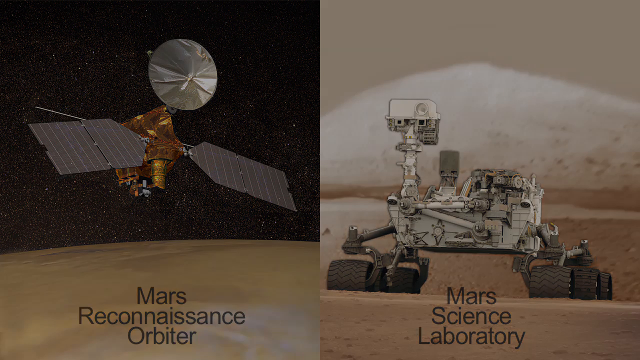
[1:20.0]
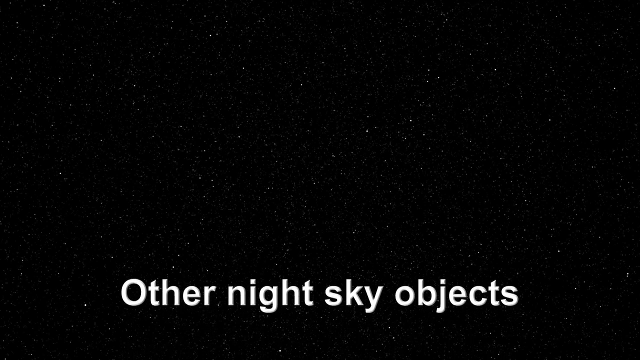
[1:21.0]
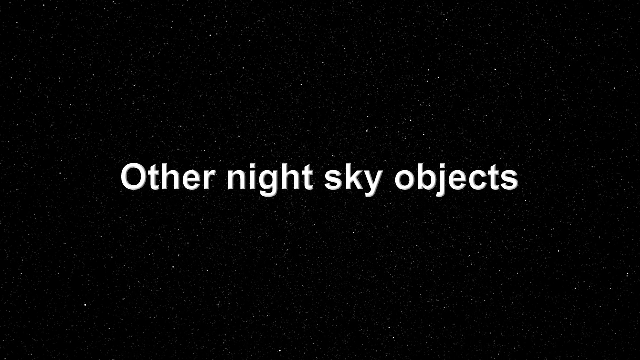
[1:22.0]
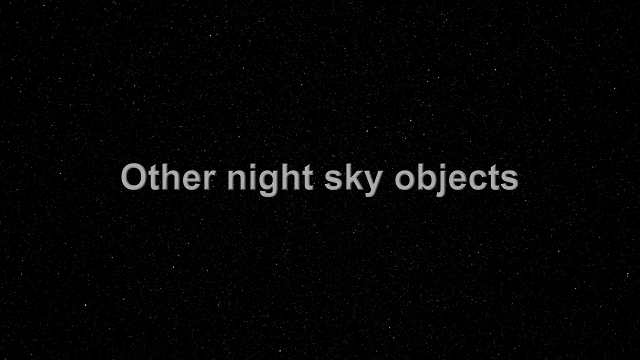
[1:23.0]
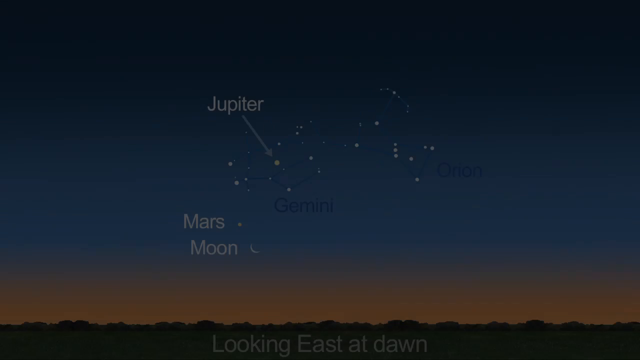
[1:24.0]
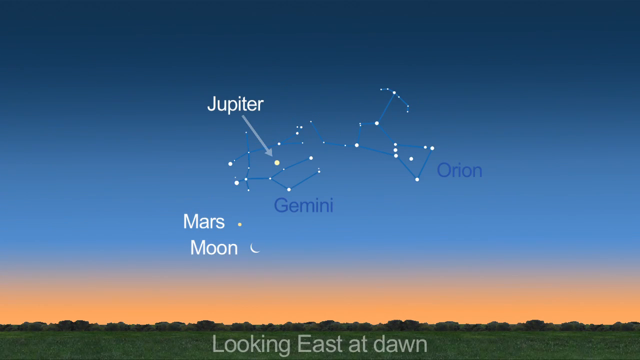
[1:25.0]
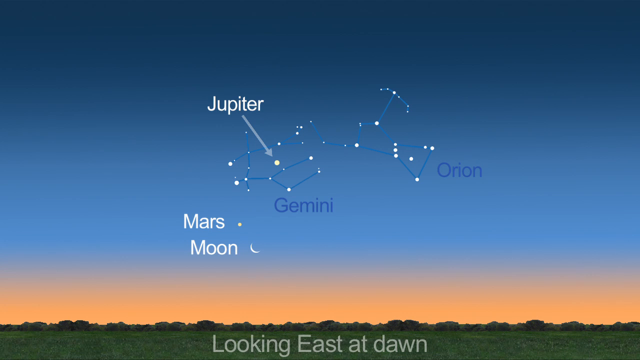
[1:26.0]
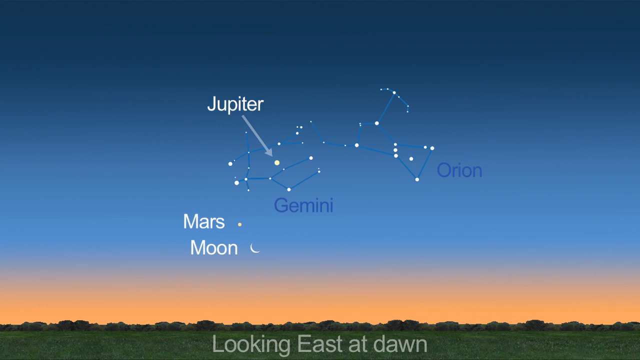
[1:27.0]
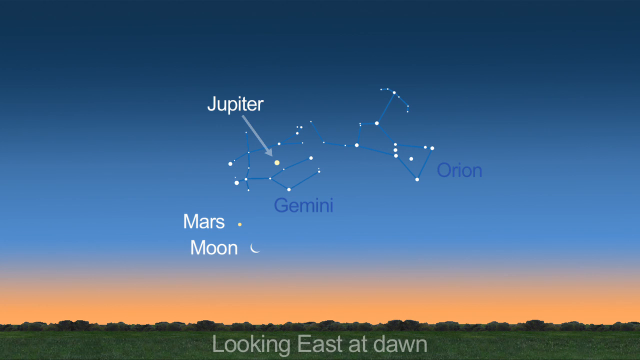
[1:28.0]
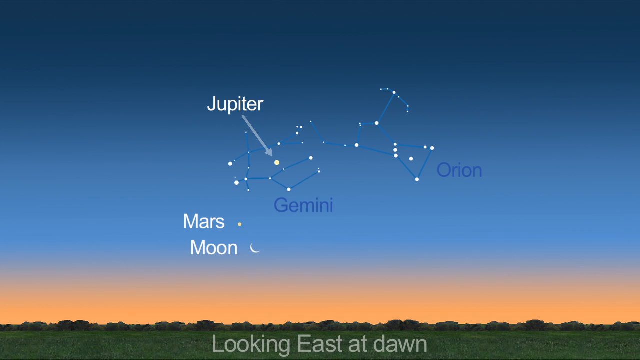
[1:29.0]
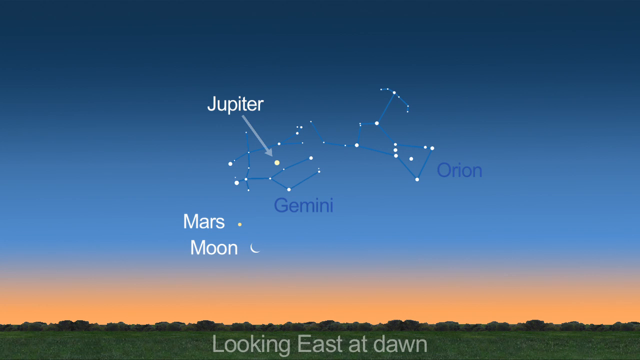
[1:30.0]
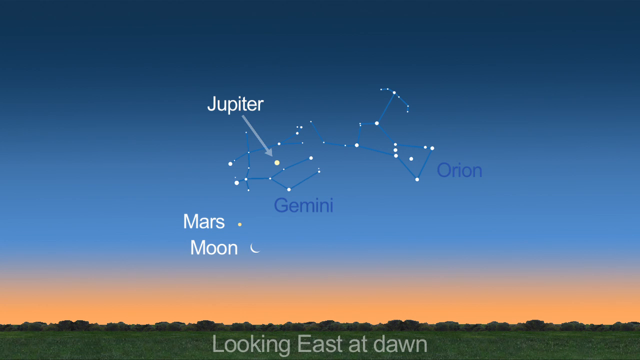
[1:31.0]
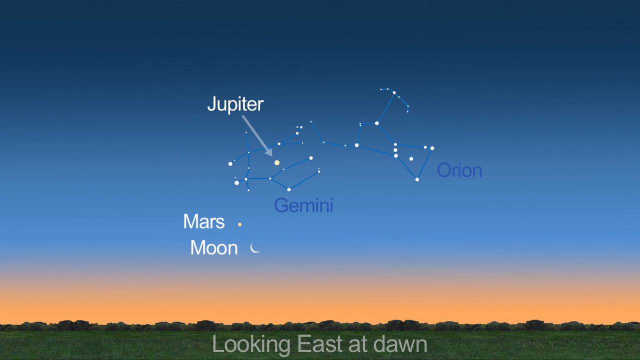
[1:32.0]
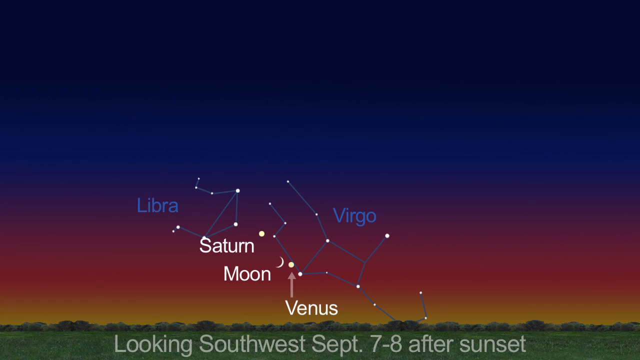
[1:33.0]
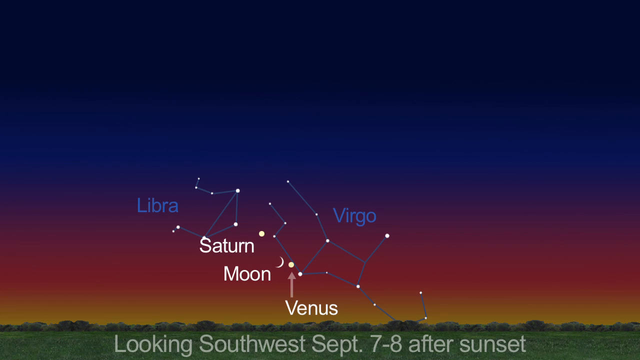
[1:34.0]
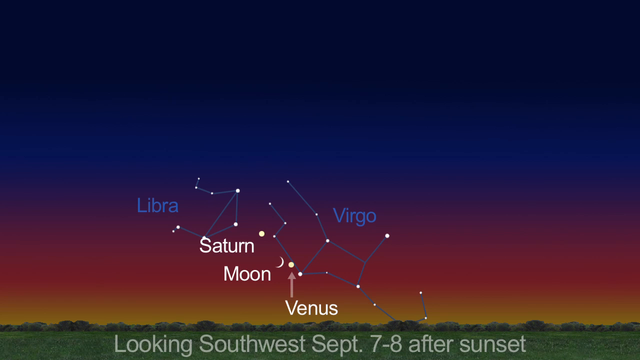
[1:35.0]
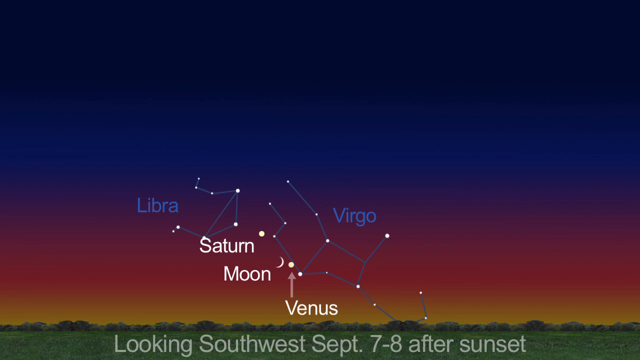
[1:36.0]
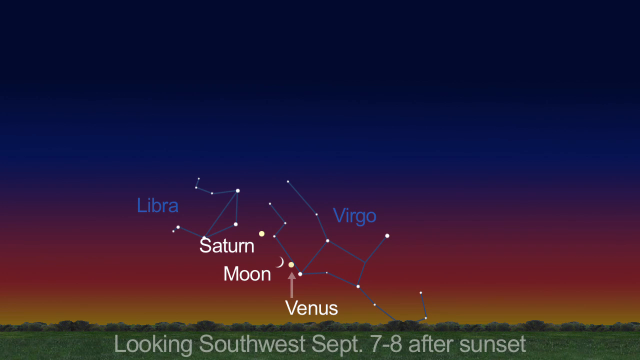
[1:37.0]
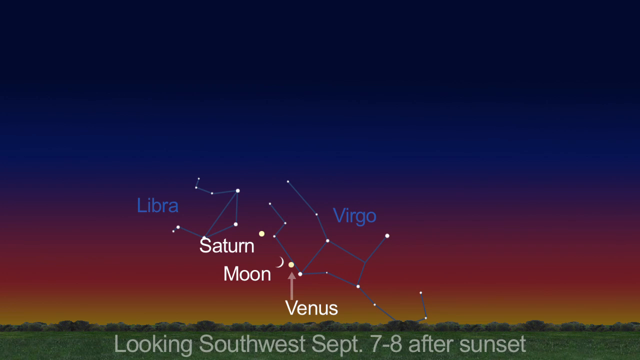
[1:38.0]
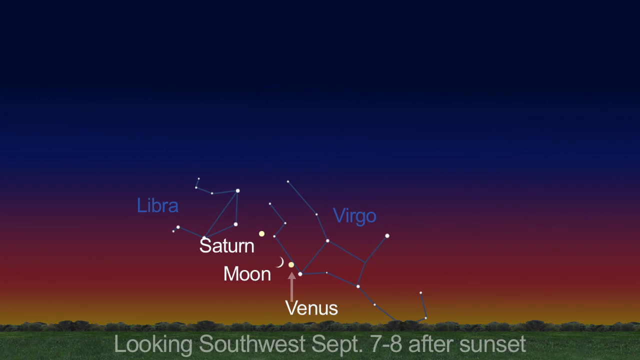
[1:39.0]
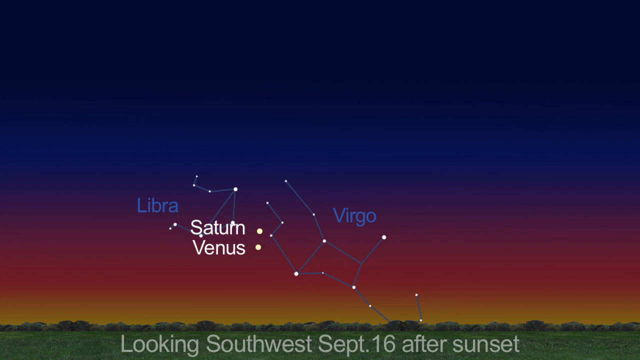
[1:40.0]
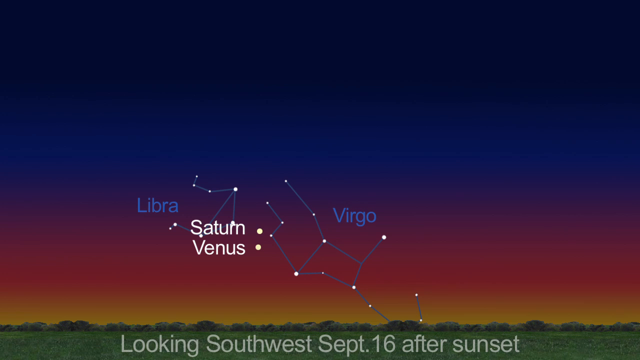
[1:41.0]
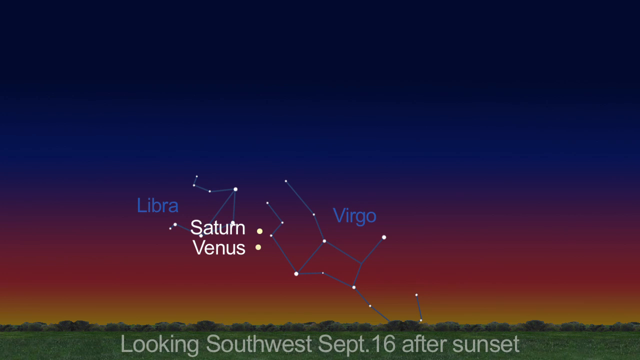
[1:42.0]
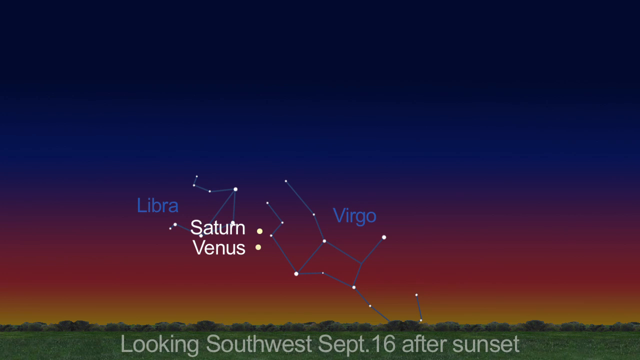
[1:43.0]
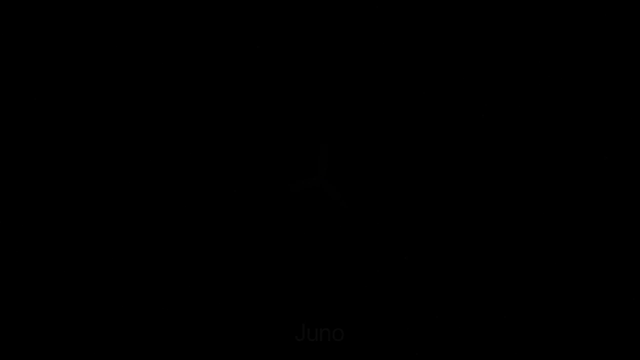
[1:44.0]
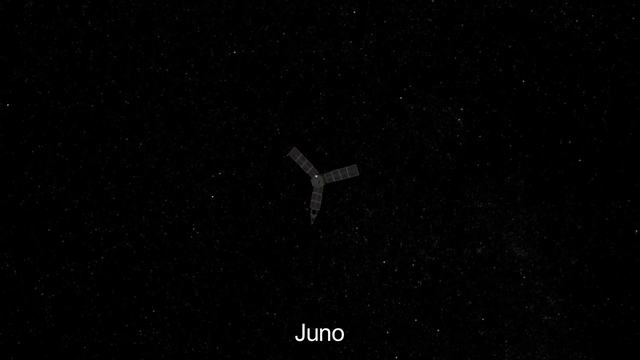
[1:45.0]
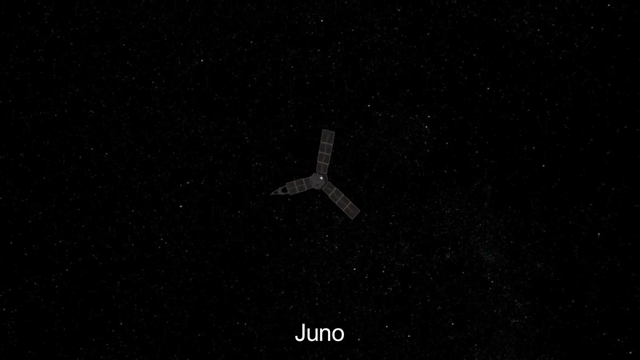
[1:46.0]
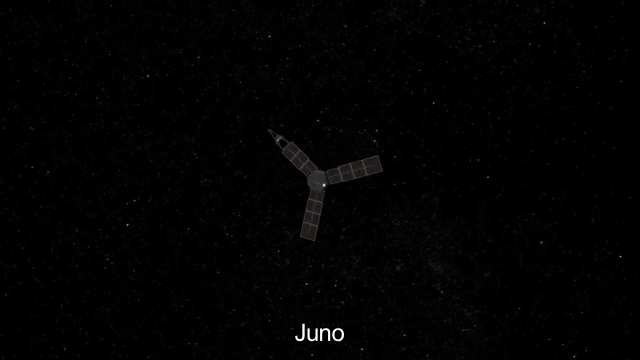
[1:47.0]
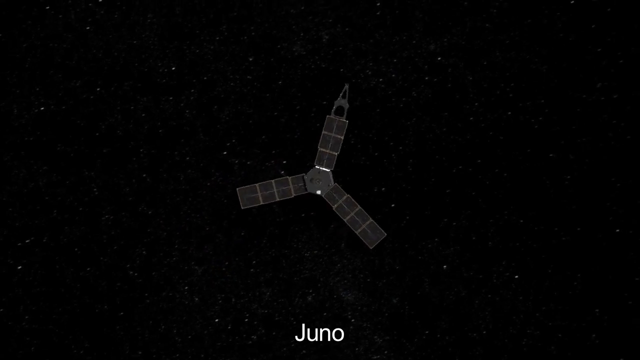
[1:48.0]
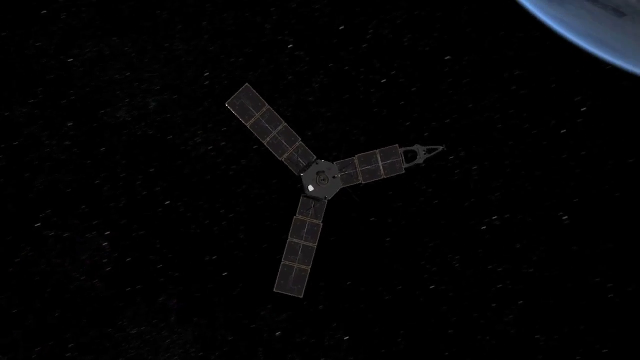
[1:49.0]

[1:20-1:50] Two different rovers are shown: the one on the left is called the Mars Reconnaissance Orbiter and the one on the right is something like a Mars Reconnaissance Vehicle. Text in white letters on a fake black space background reads "other night sky objects". Jupiter, Mars and the Moon are shown, probably at sunrise, in what does not seem to be a real picture, with the Orion and Gemini constellations visible; Jupiter is pointed out in the constellation of Gemini, with the text "looking east at dawn", and it looks drawn in. Text reads "looking southwest September 7th to 8th after sunset" as the Libra and Virgo constellations appear along with Saturn, the Moon and Venus. The text changes to "September 16th after sunset, looking southwest". Then "Juno" appears with something that has three sides, which looks like some type of flying thing.